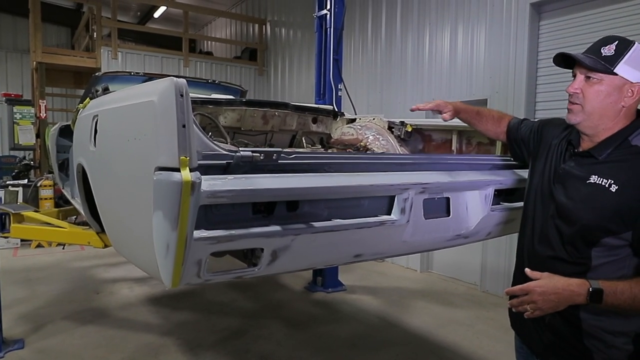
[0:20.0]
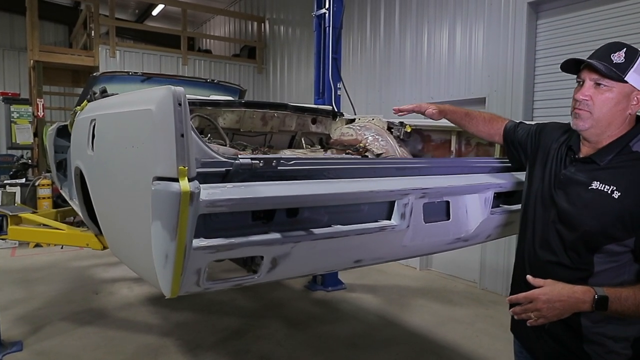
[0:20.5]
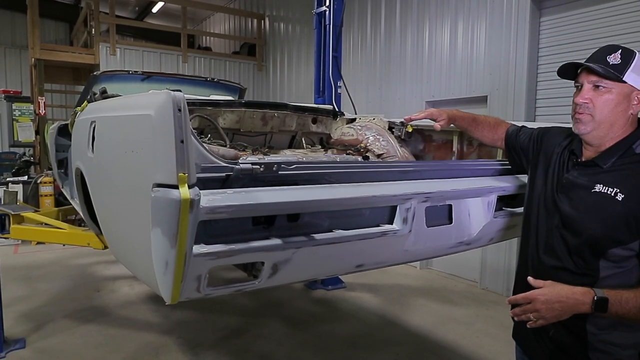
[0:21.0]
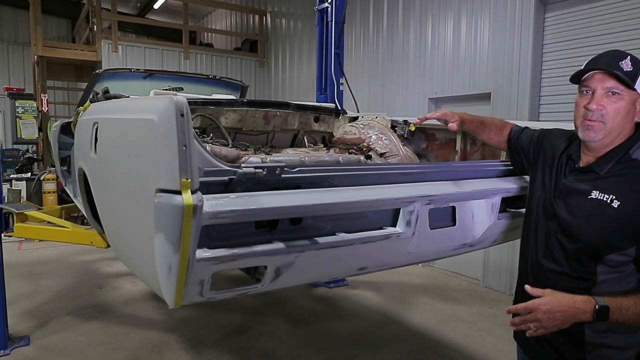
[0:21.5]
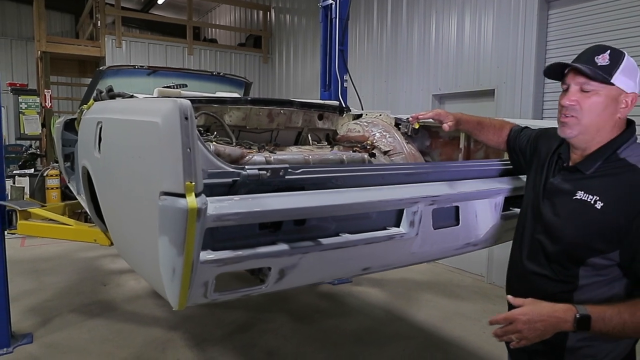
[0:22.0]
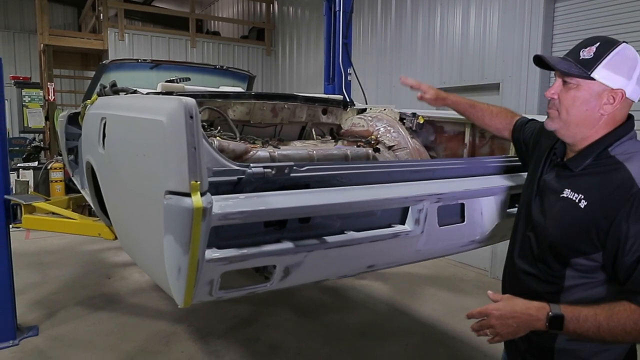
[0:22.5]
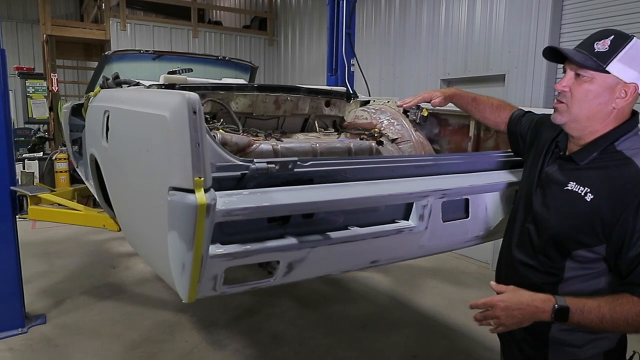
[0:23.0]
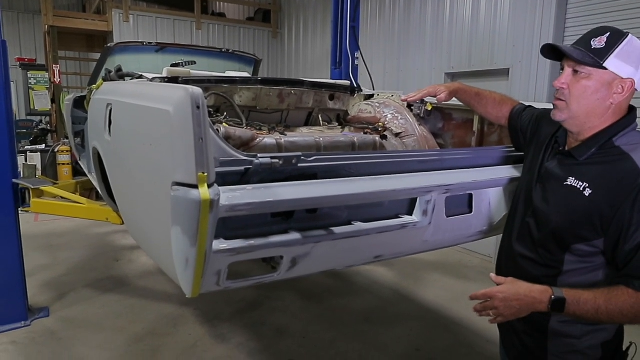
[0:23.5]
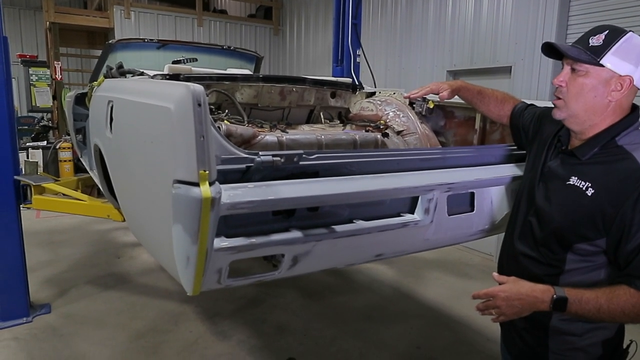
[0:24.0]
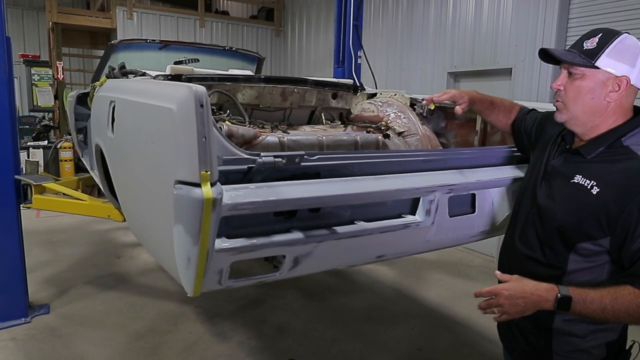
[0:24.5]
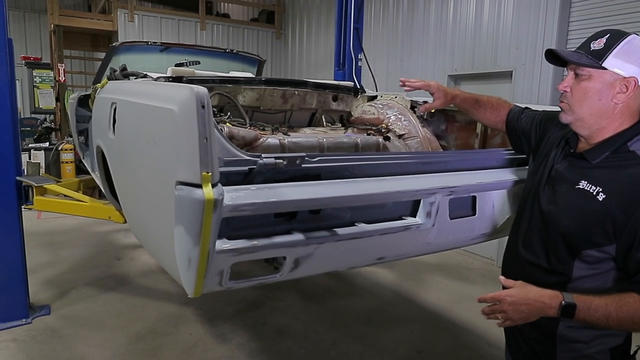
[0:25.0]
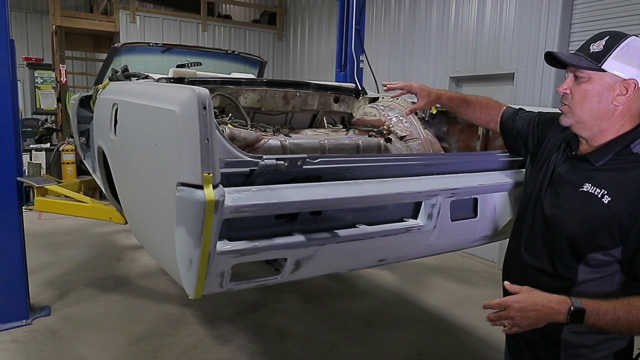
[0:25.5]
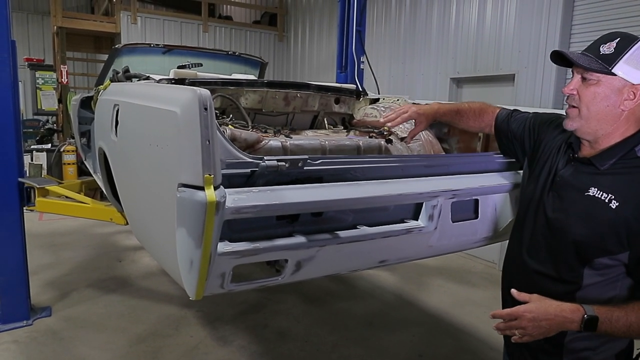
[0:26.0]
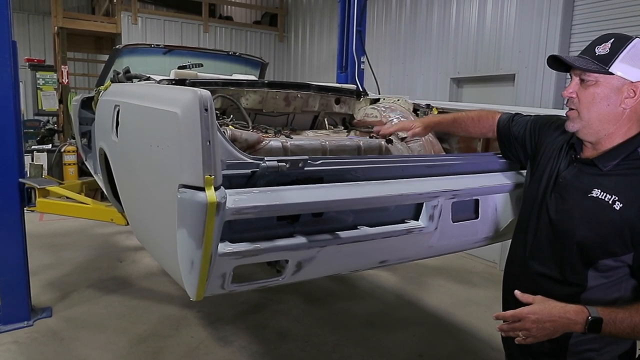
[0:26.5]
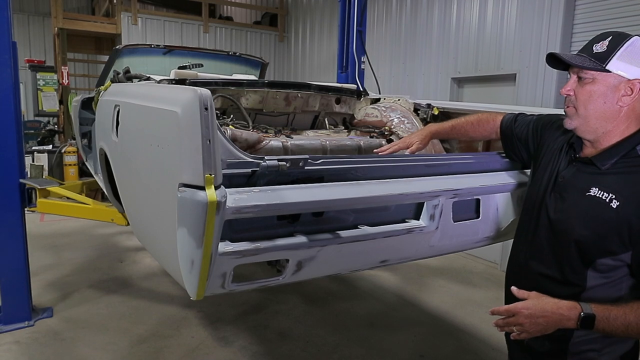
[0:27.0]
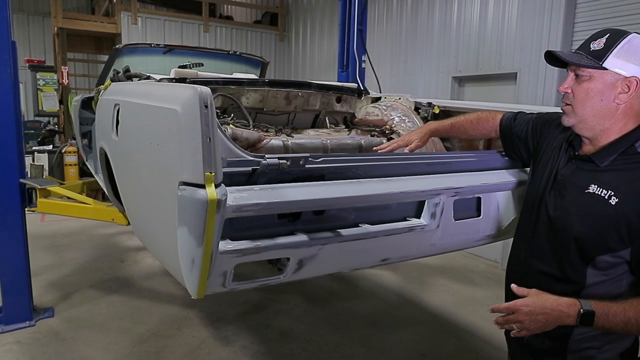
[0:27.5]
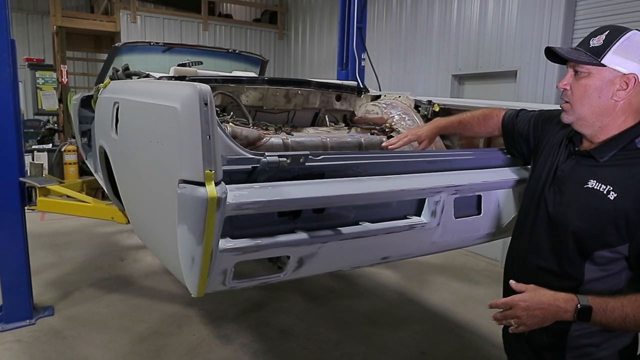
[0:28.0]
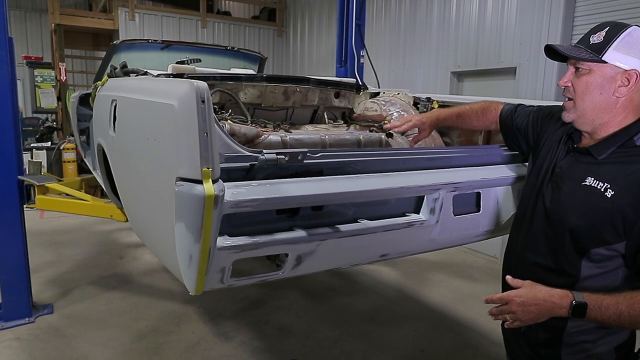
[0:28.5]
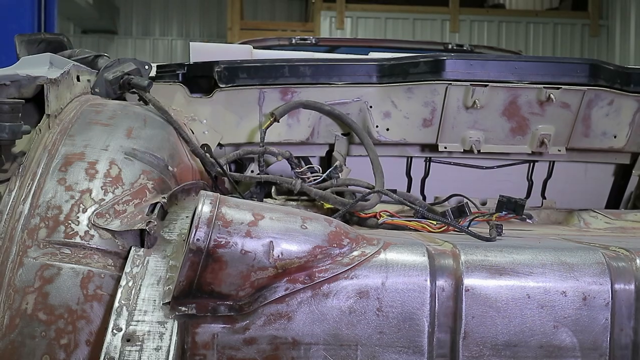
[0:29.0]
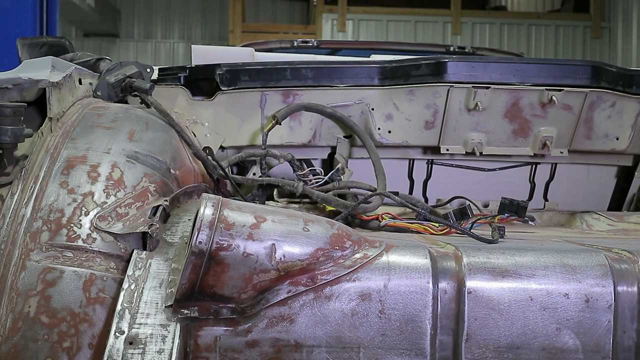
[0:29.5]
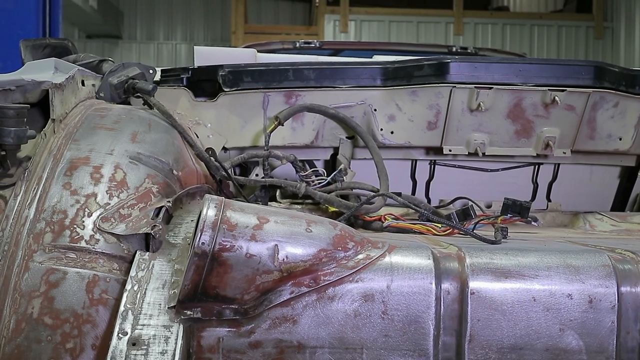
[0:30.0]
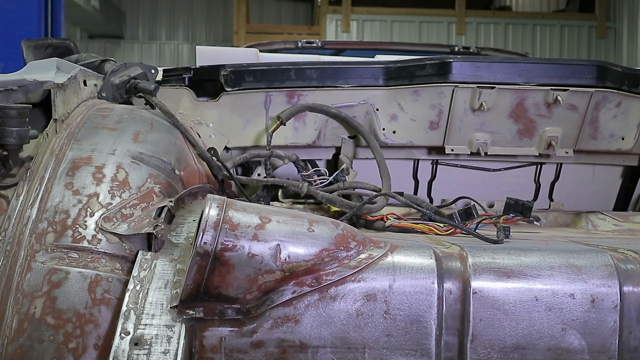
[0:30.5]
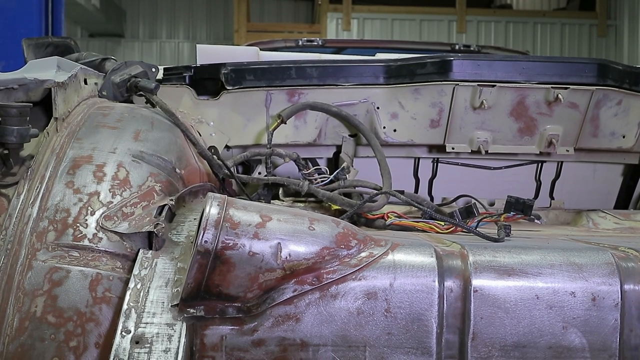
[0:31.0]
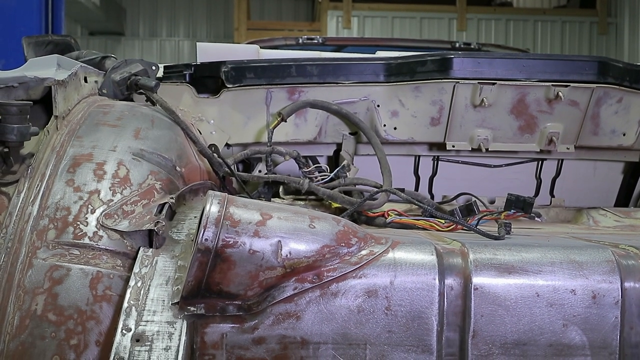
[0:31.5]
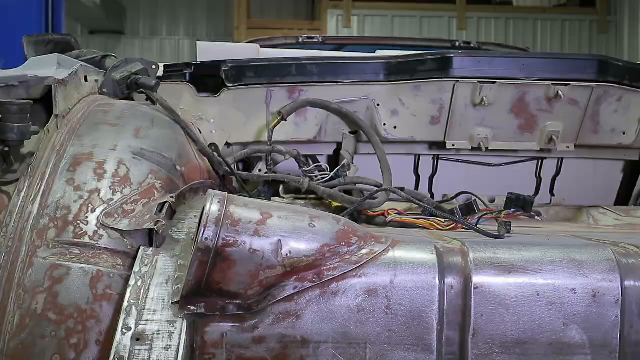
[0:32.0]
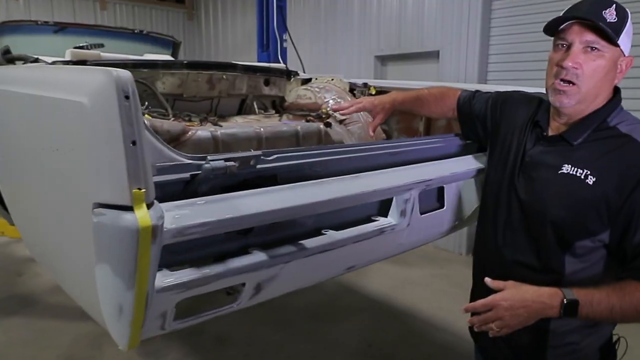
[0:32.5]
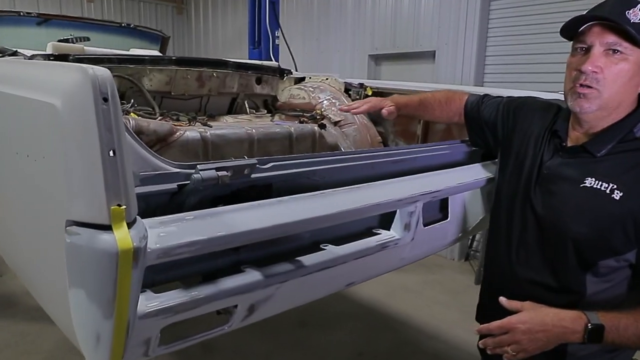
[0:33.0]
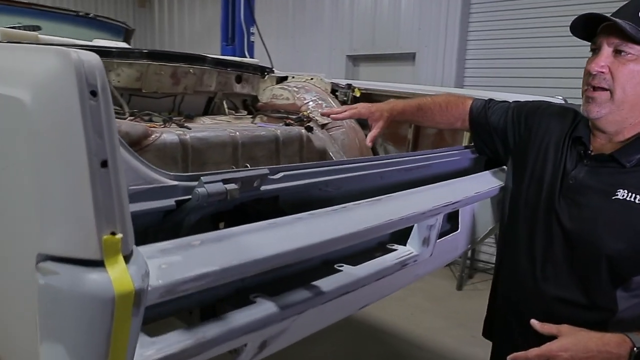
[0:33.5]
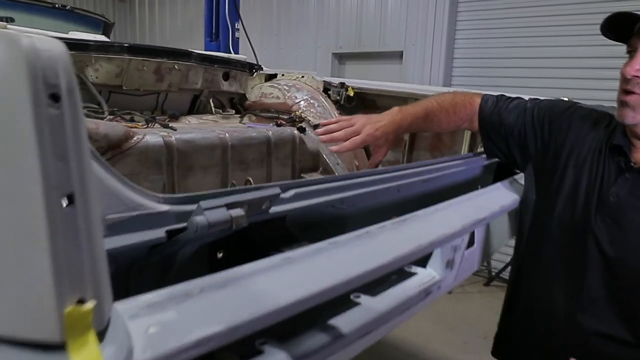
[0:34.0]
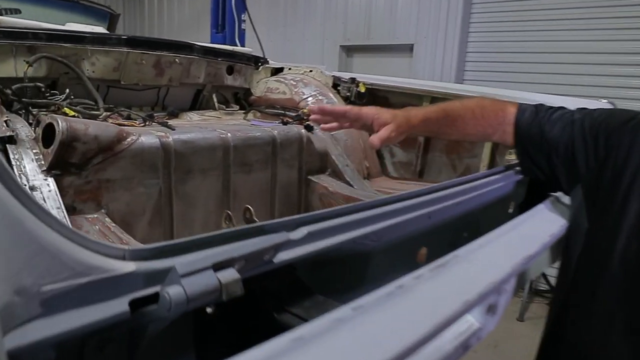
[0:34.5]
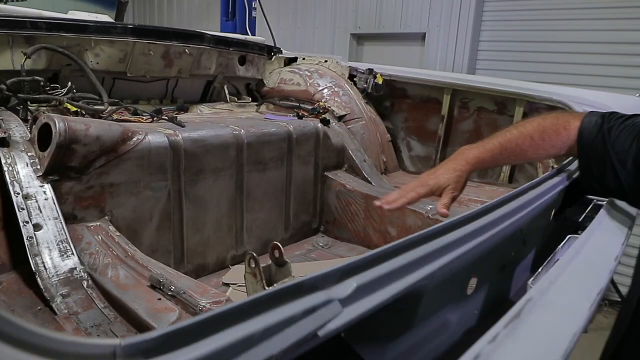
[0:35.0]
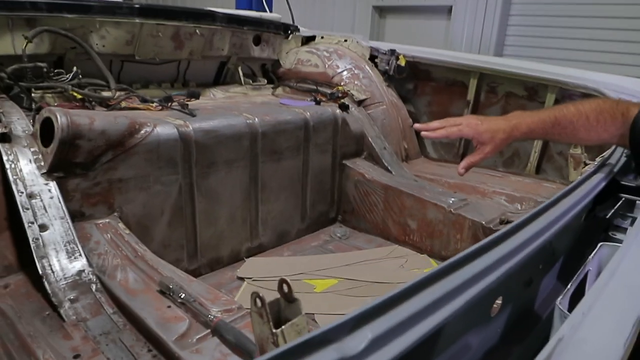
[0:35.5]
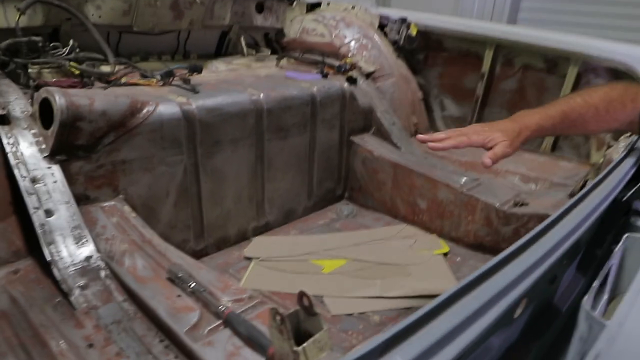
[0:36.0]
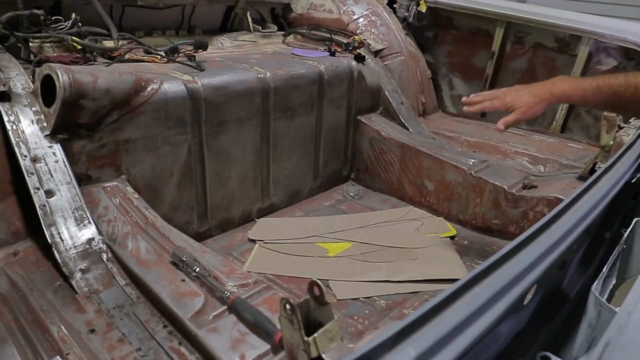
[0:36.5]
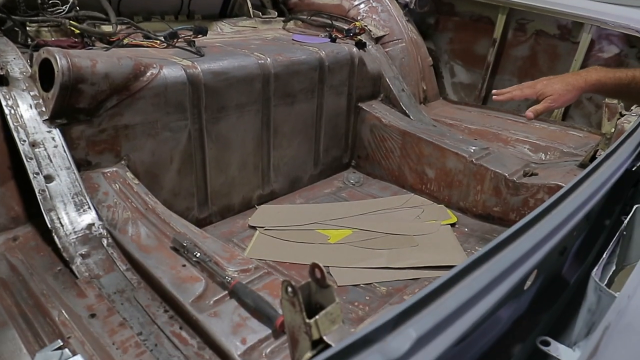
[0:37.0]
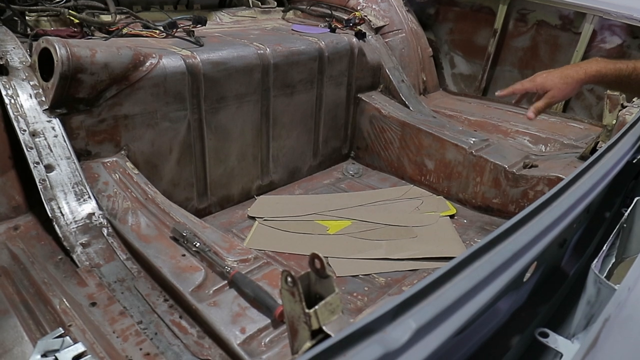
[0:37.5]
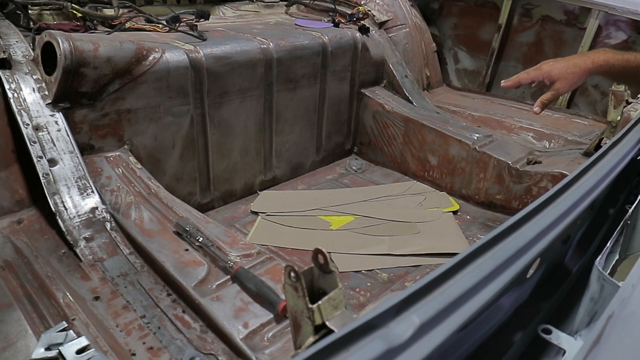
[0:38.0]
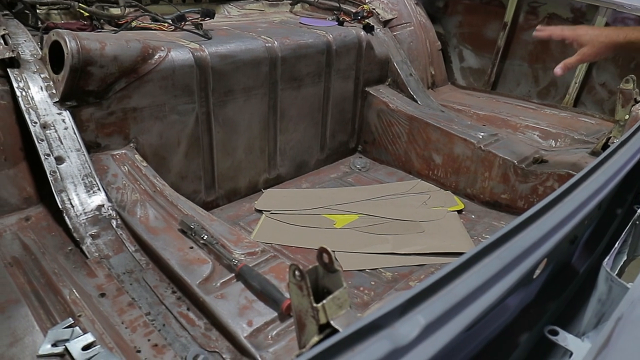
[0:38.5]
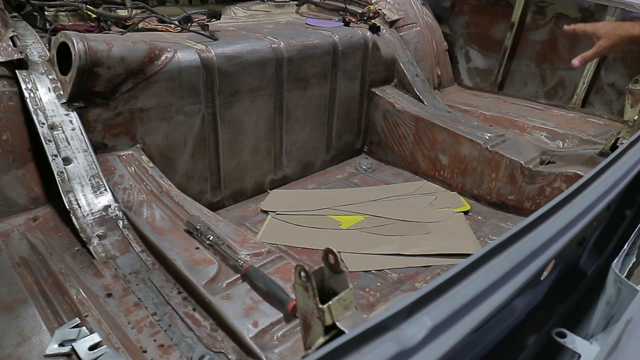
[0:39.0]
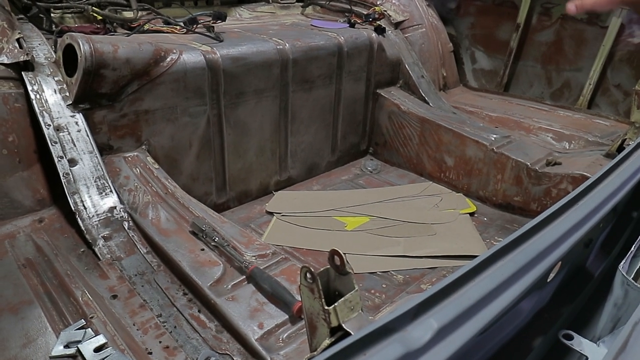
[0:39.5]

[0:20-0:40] A white car is up on a blue rack. A man in a black shirt and a black and white hat stands behind the frame of the car, talking about its back part. The inside back part of the car looks a little damaged and rusted out, as if it needs some repair work. At the back of the car, a yellow harness helps hold the vehicle in place. There is shelving to the front of the car, along with yellow machinery that is part of the garage equipment. On the right side of the frame are the gray metal garage door and the gray walls of the garage. The man points to different areas inside the car that are damaged and apparently need repair; these pieces look rusted out and in pretty bad shape.